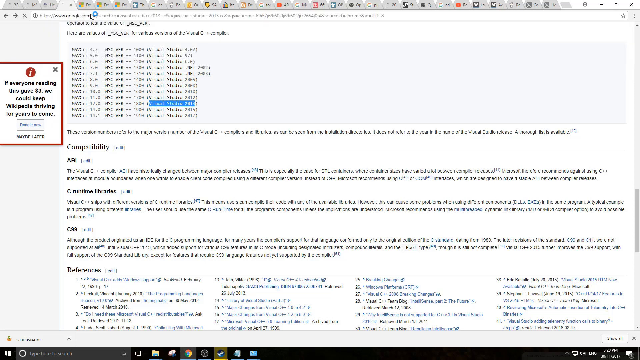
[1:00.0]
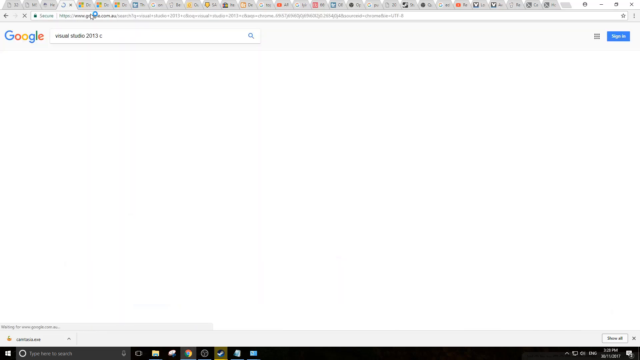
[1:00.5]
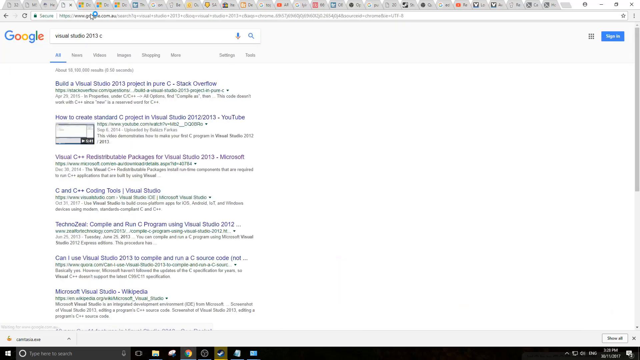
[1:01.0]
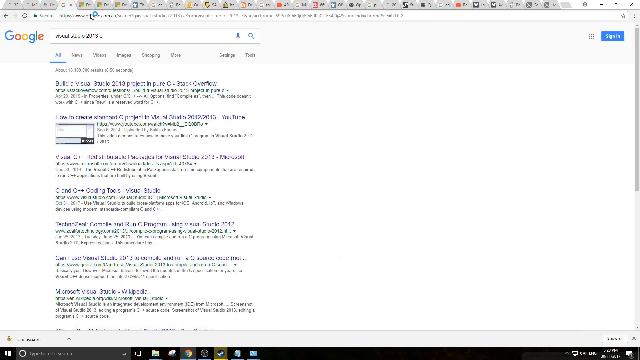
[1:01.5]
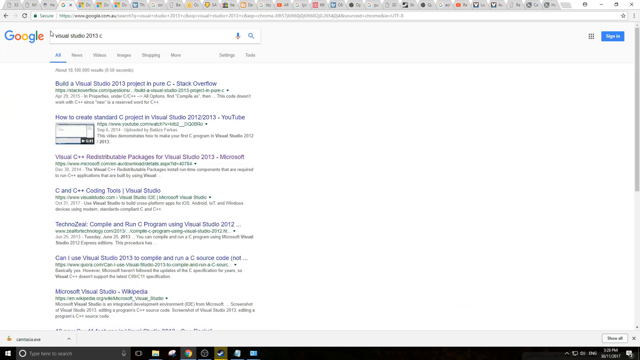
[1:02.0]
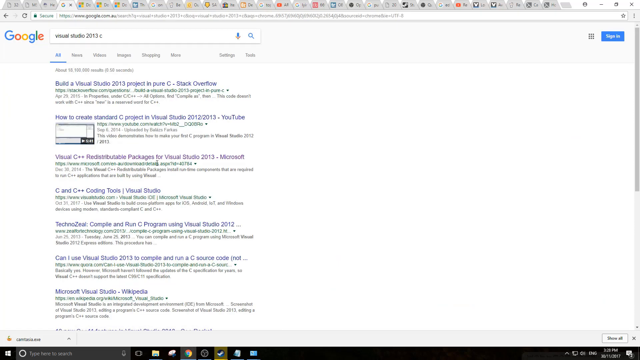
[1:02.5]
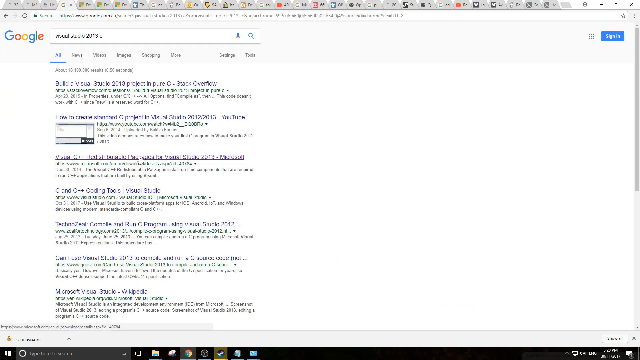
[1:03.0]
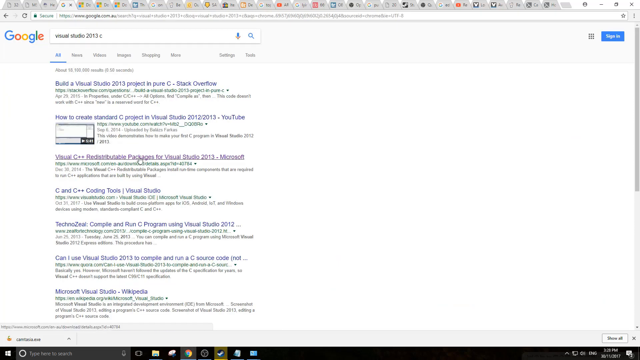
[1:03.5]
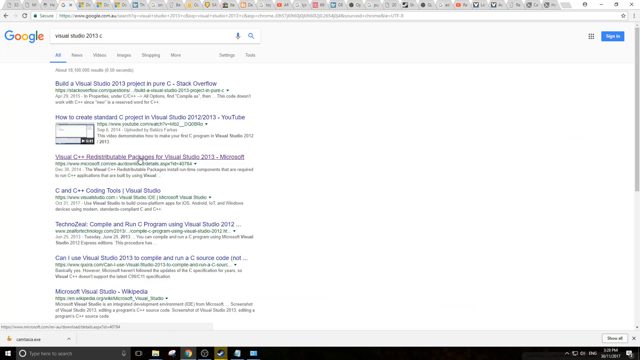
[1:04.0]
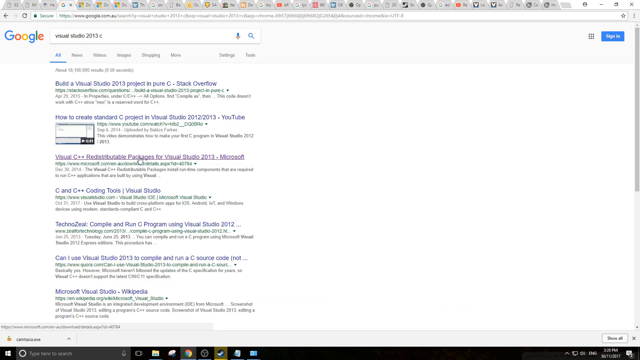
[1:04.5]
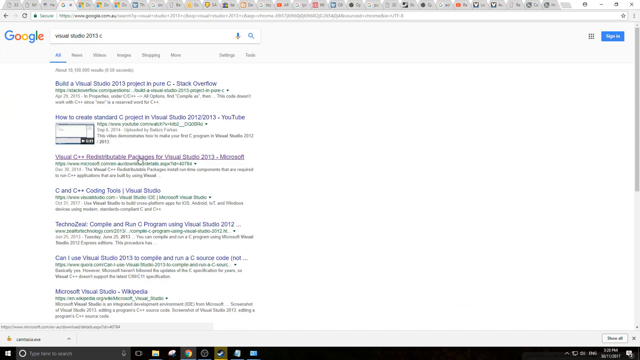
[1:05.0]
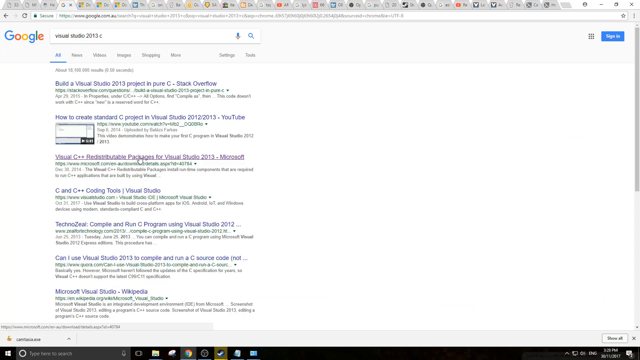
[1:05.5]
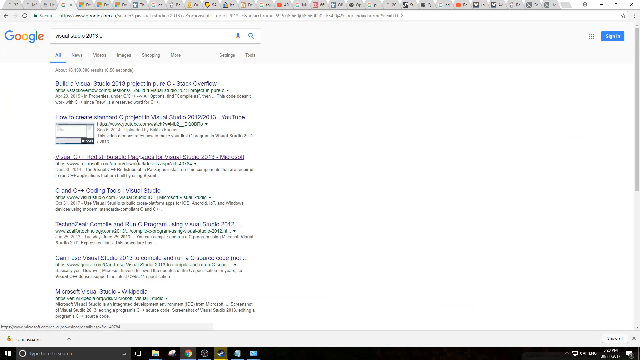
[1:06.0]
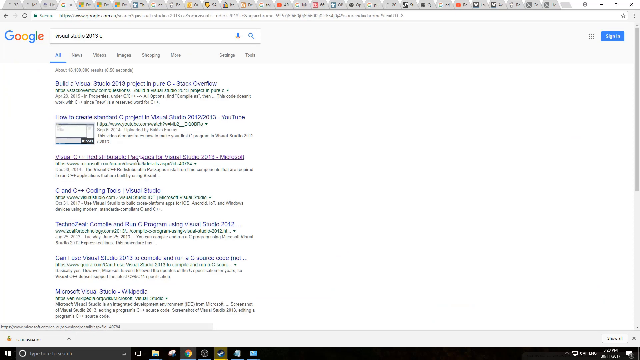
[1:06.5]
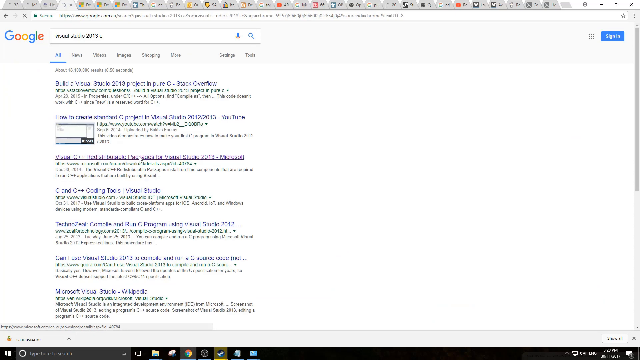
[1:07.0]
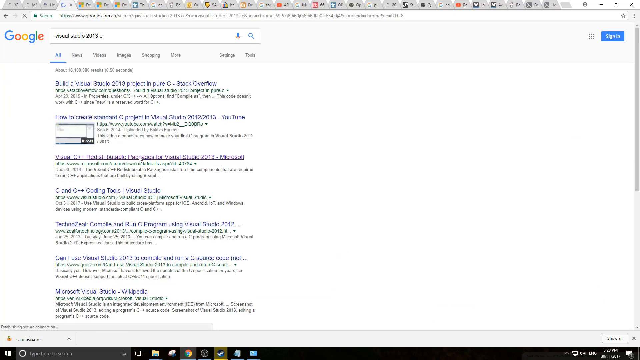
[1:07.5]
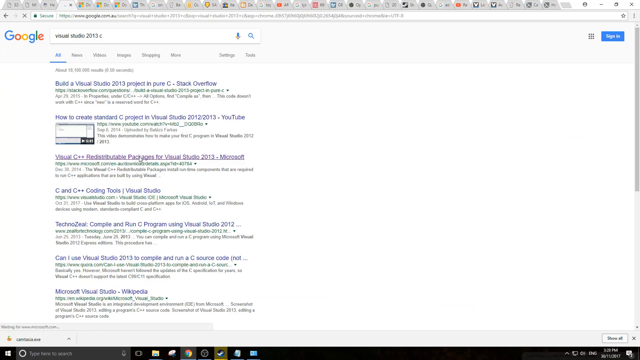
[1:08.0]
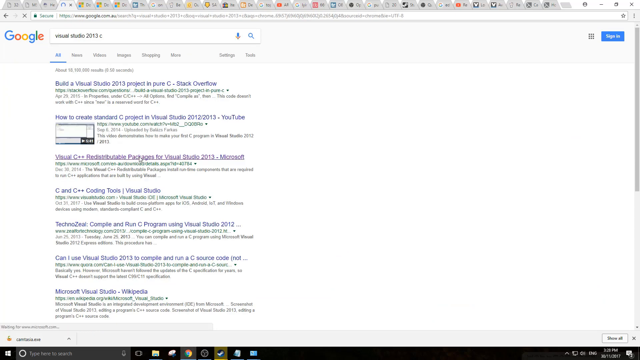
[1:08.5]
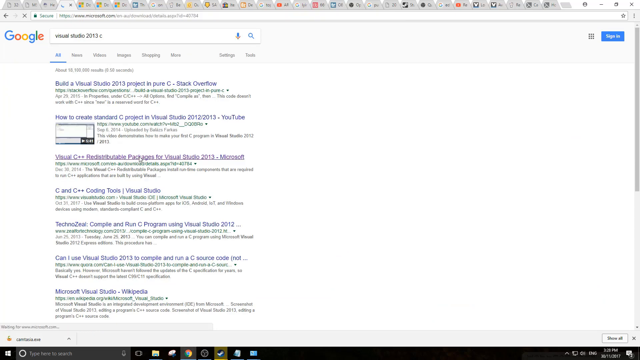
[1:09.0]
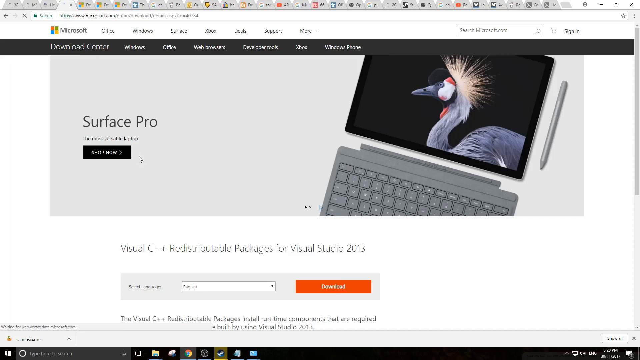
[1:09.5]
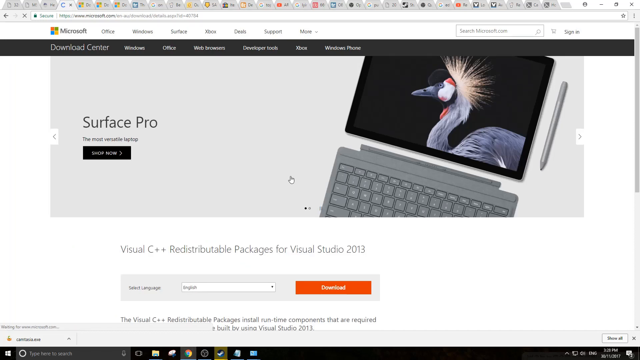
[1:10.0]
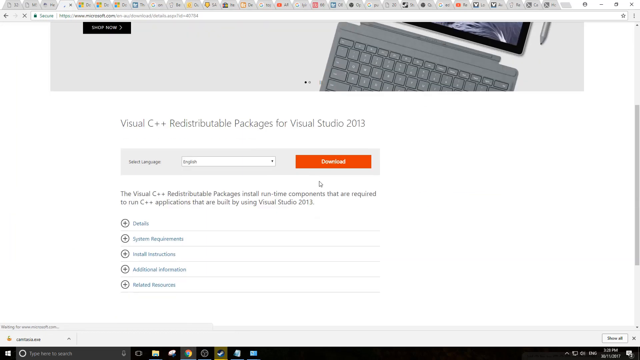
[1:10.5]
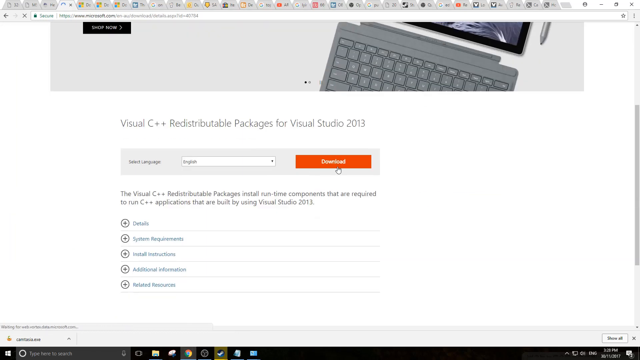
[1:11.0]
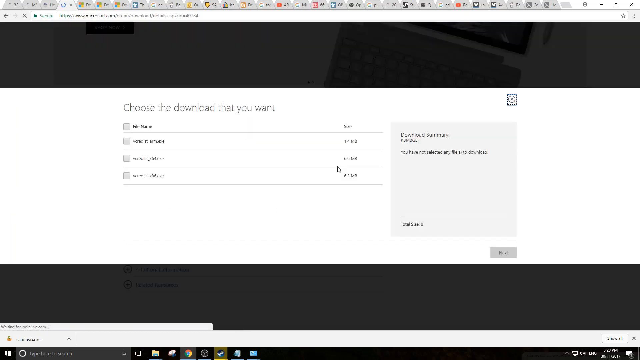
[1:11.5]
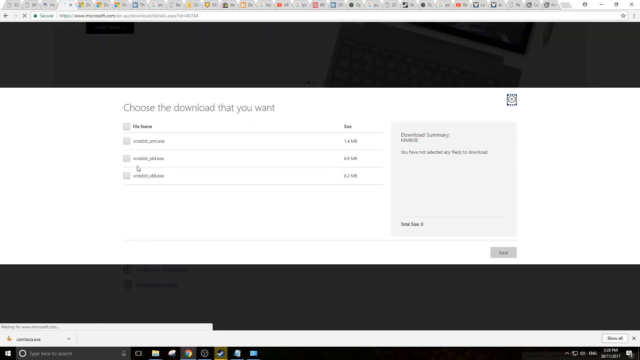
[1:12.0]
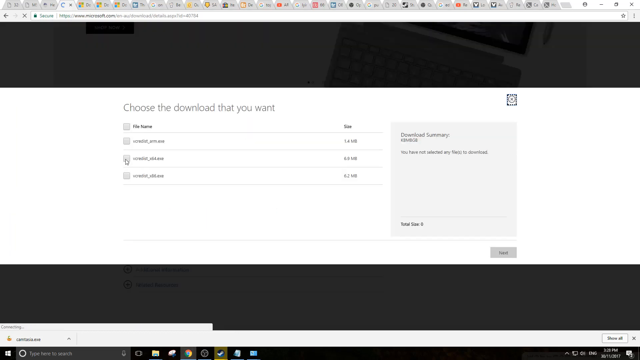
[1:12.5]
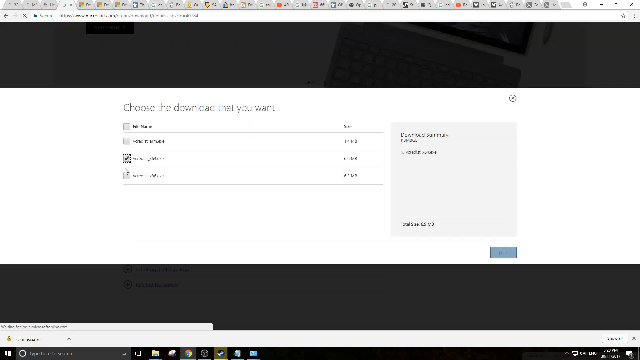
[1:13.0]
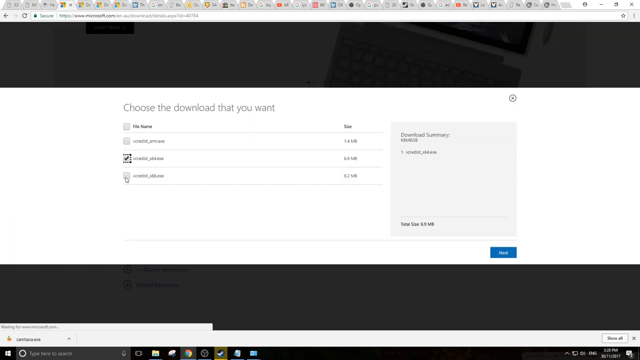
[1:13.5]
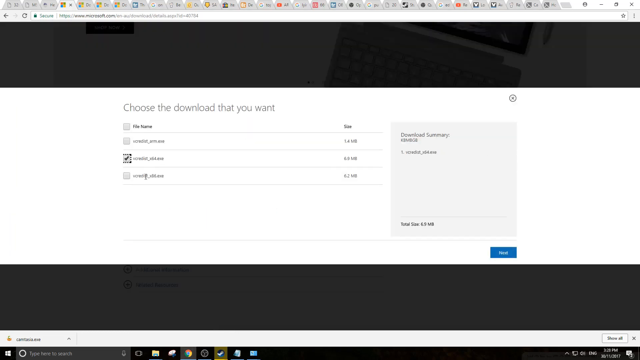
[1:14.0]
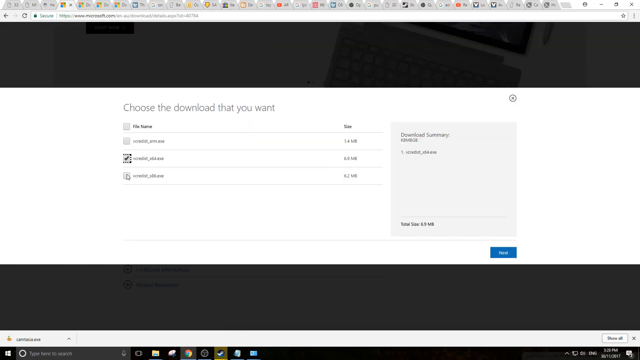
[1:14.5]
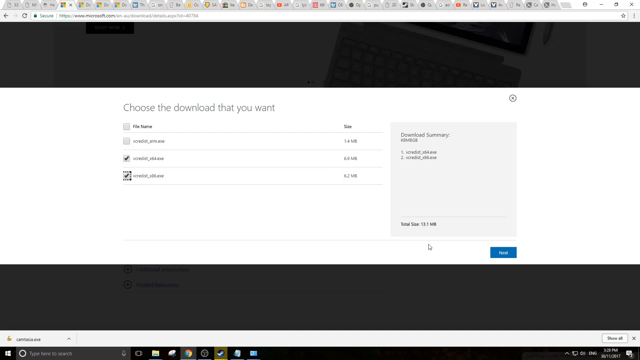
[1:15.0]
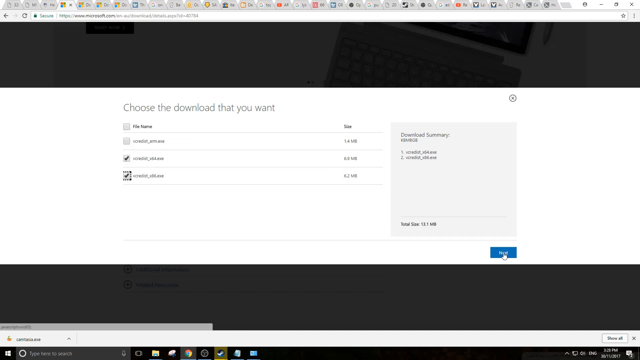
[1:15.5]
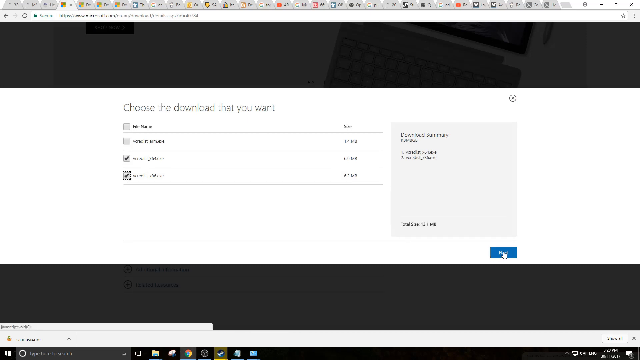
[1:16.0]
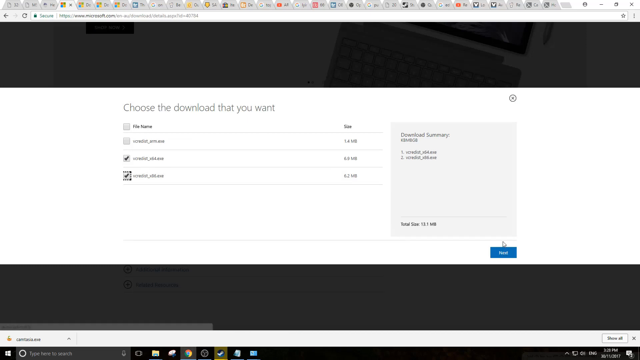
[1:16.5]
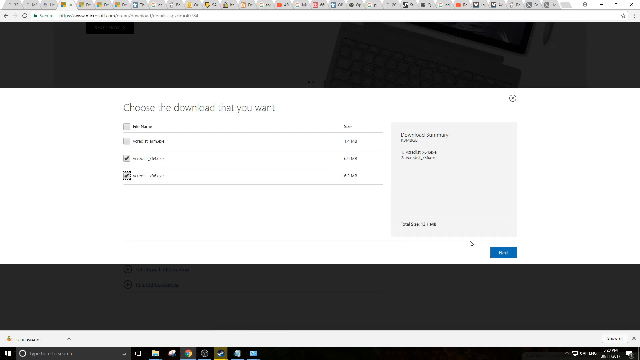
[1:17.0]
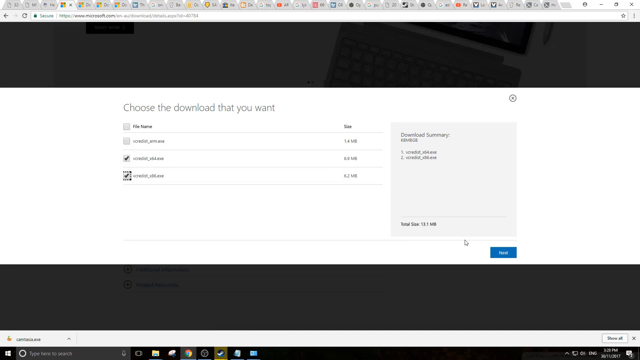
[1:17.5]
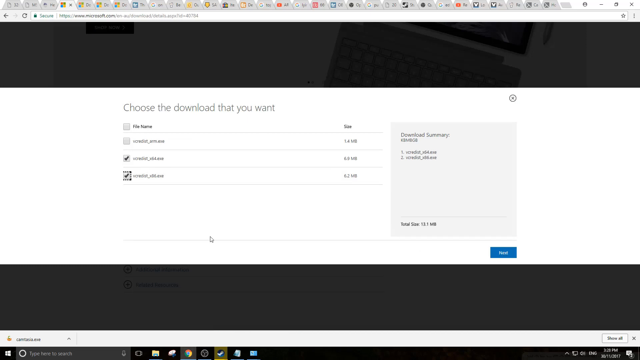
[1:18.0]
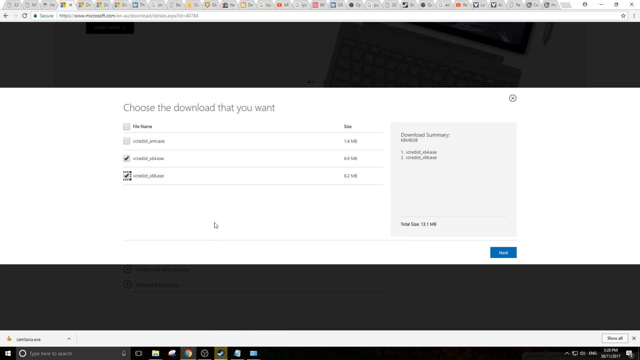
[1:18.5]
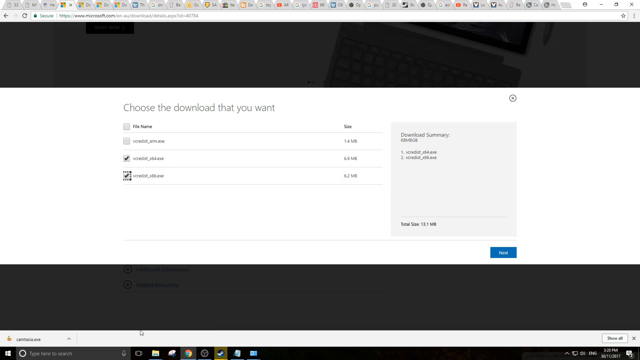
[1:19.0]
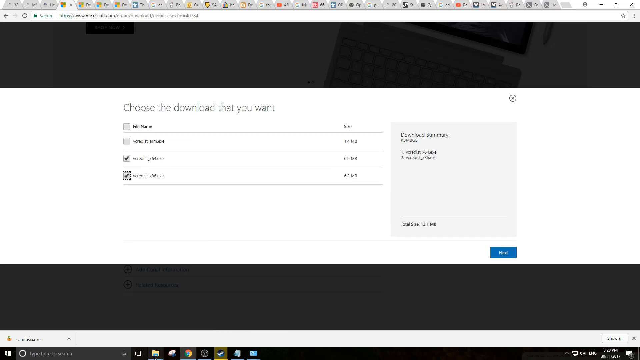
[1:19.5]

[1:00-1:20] A Google search shows results for Visual Studio 2013 C. The user moves the mouse down to the third search result, which begins "Visual C++ redistributable packages for Visual Studio 2013", and clicks the link, opening a Microsoft website for the Visual C++ redistributable packages for Visual Studio 2013. A box at the top shows a picture of a laptop computer with a bird on its screen and a stylus pen next to it; it is an advertisement for Surface Pro, the most versatile laptop, with a black box below saying "shop now". Below that are the Visual C packages. The selected language is English, and the user clicks the orange download button. Below the download button are drop-down menus for detailed system requirements, install instructions, additional information and related resources. After the download button is clicked, the screen says "choose the download that you want" and shows three file names. On the right-hand side is a download summary that says "you have not selected any files to download". The user selects the second and third files and presses a button to proceed.